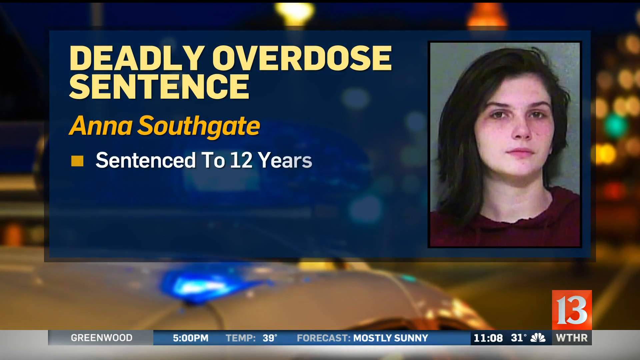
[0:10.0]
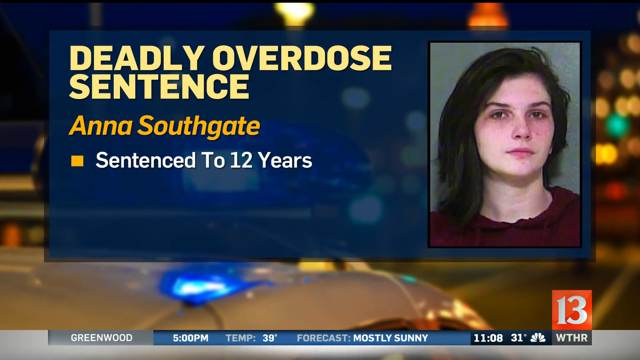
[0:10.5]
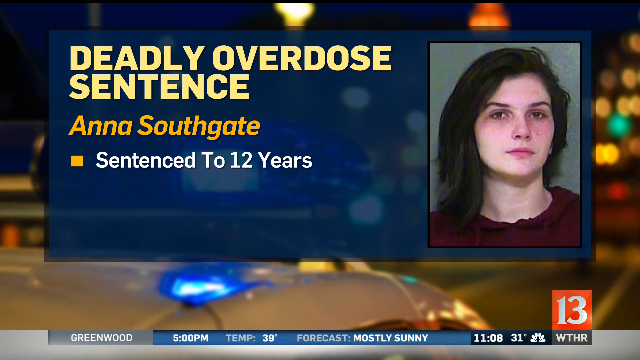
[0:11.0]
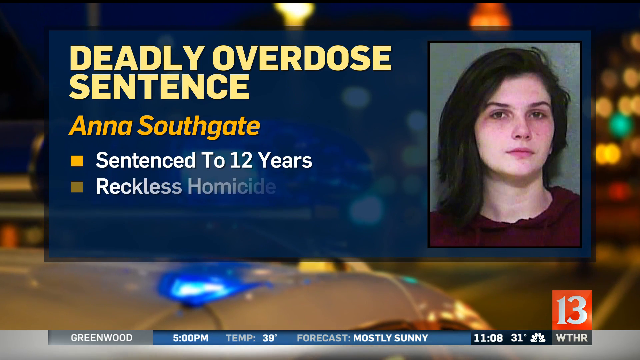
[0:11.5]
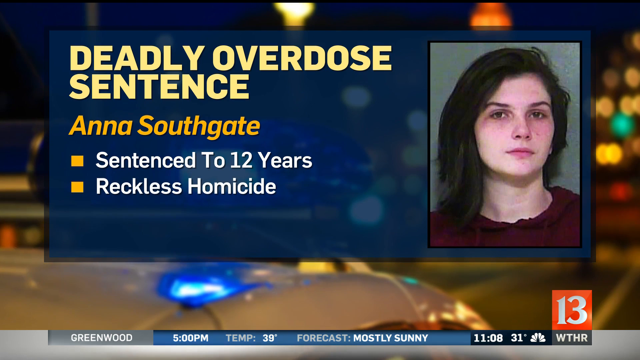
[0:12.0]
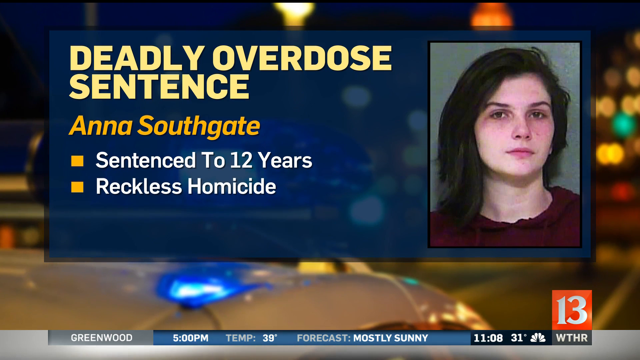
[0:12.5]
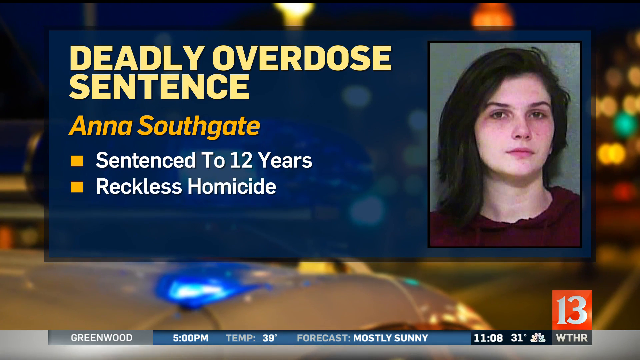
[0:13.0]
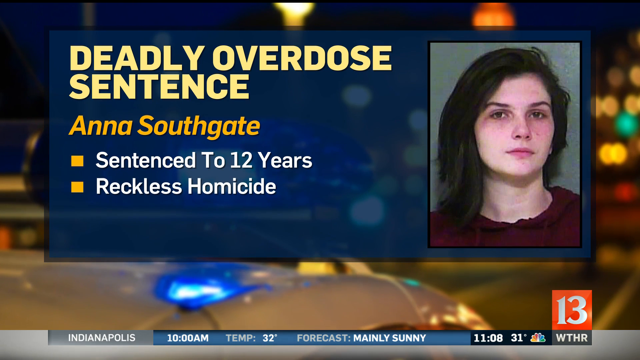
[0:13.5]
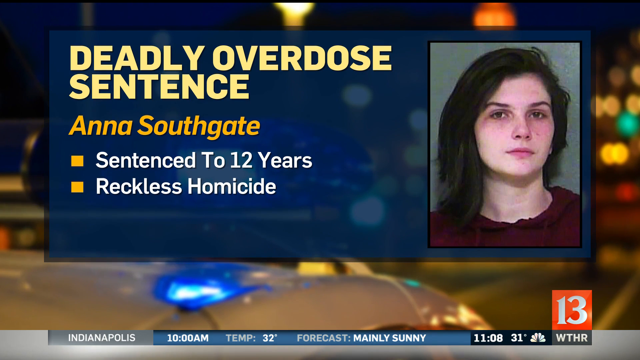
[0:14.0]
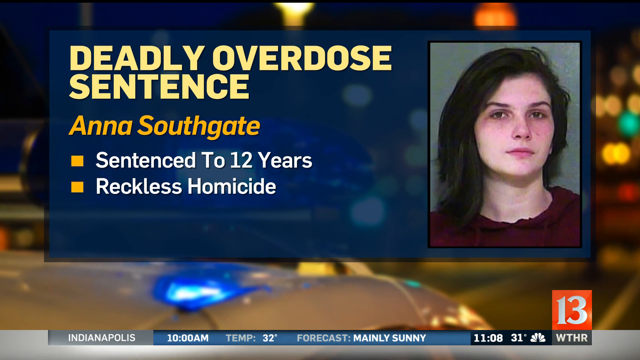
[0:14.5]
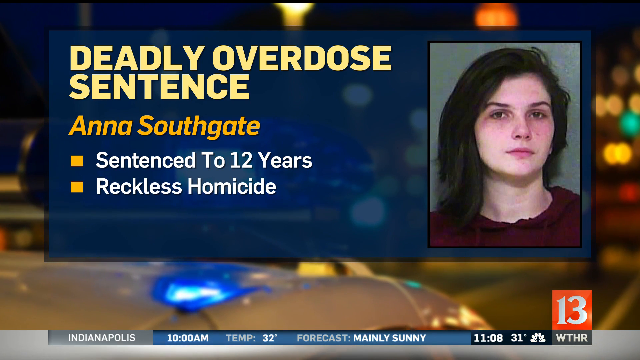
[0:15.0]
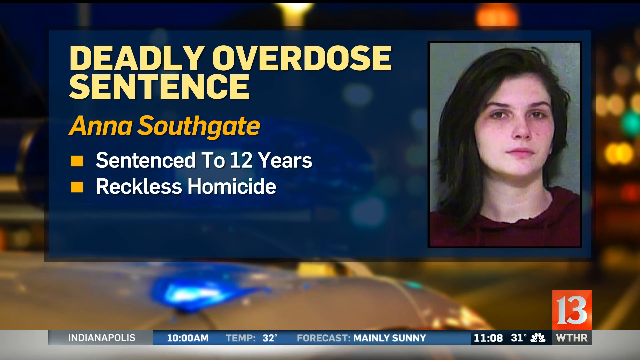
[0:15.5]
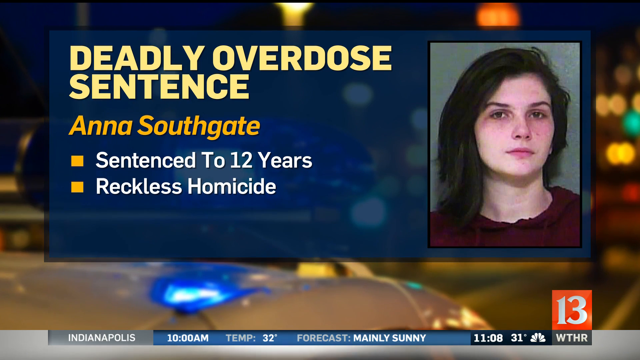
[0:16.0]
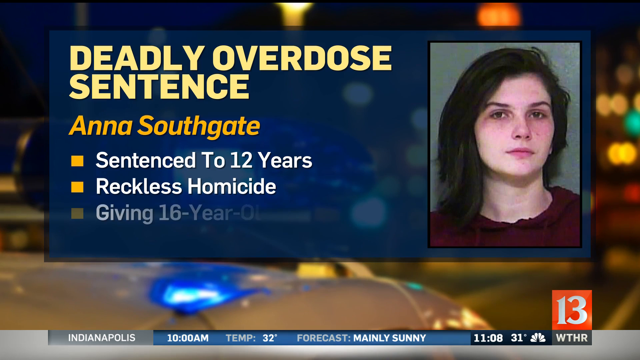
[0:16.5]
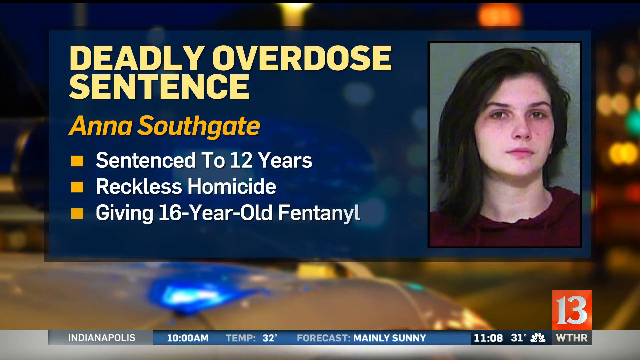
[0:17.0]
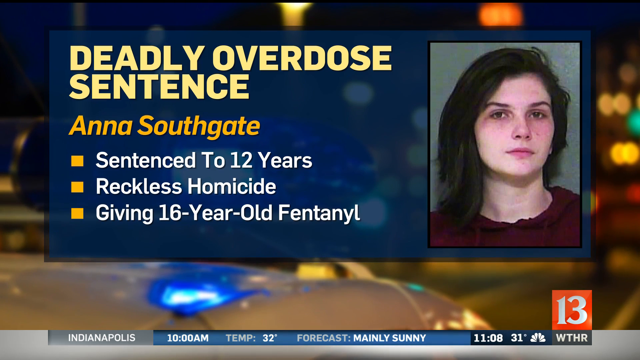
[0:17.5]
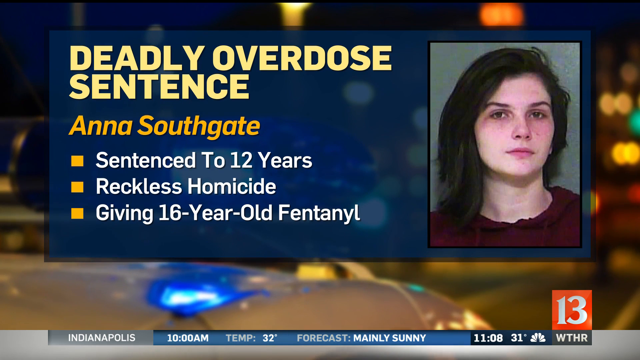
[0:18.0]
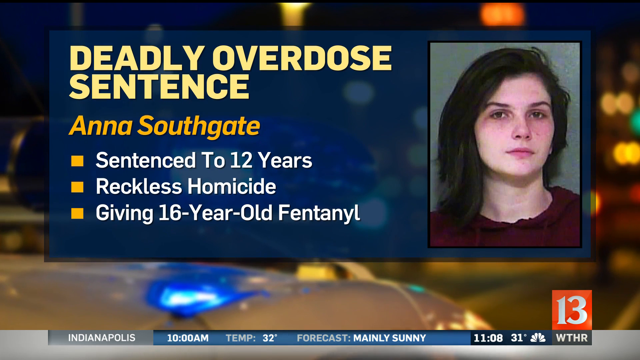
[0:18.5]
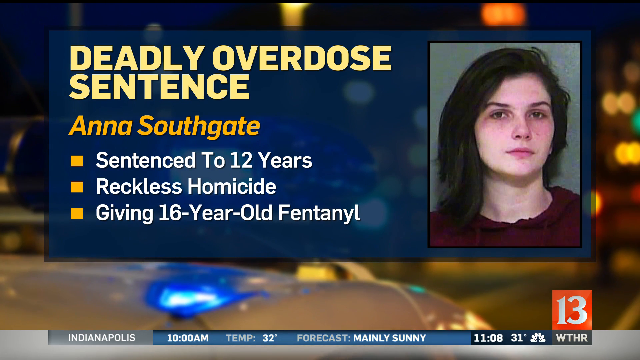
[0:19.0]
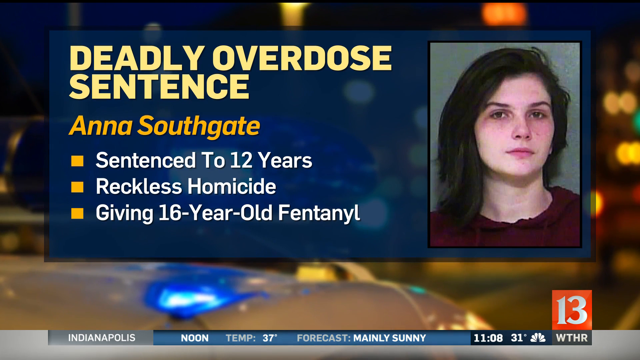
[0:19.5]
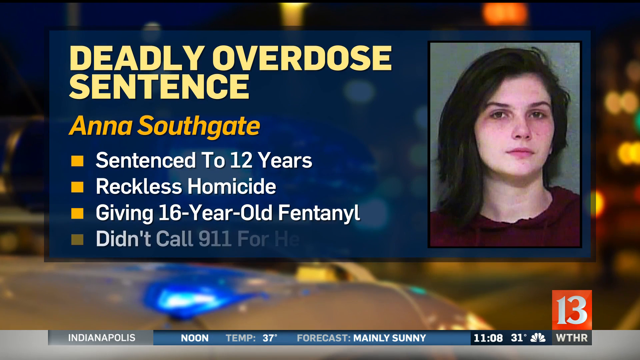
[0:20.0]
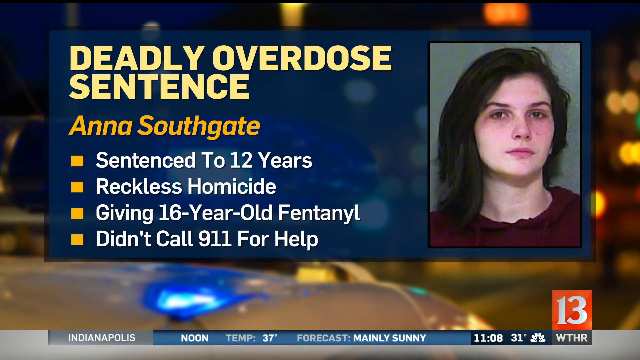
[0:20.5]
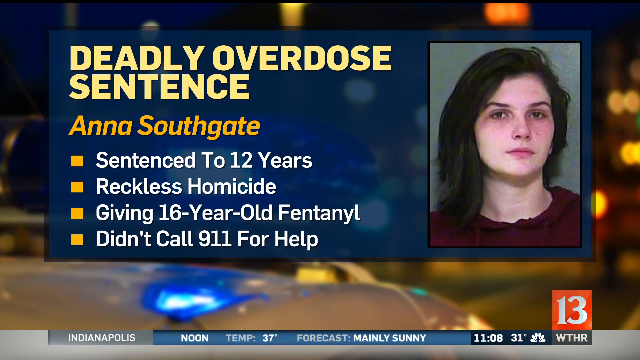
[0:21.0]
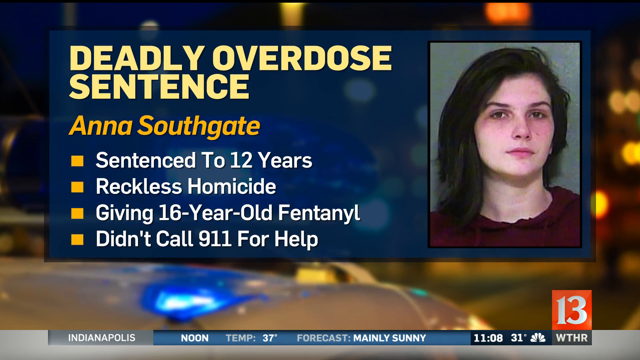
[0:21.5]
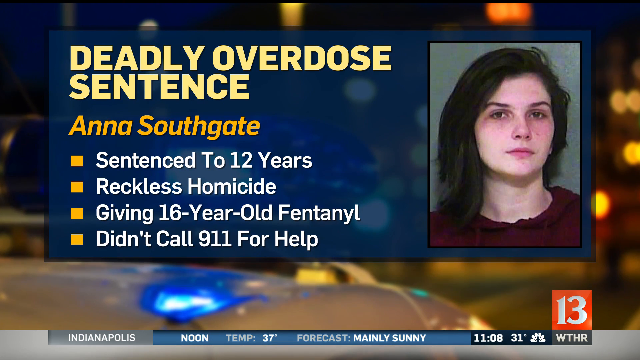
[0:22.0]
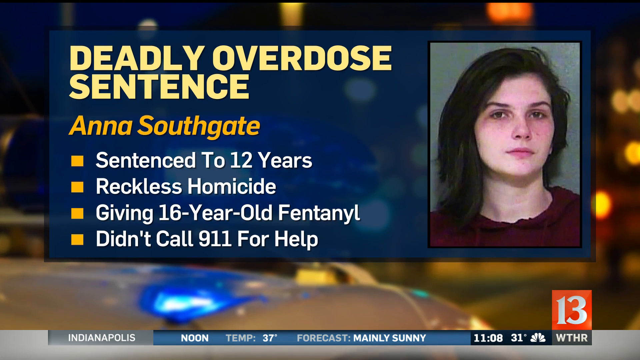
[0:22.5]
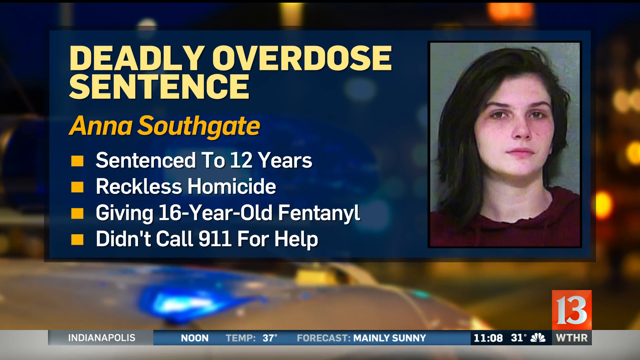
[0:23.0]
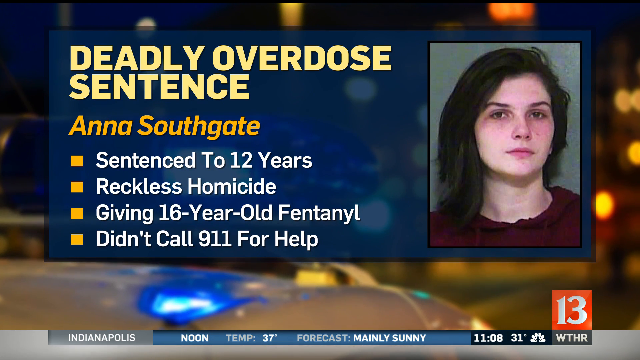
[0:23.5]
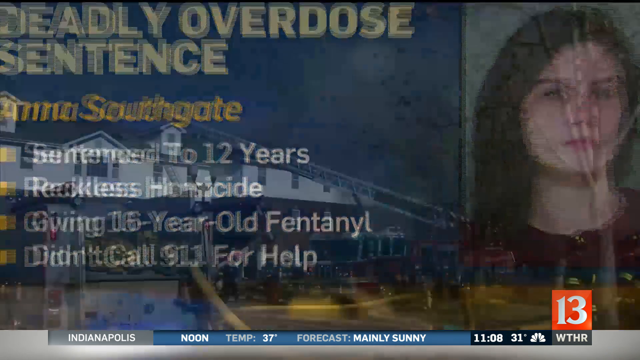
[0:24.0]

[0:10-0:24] A news report covers a deadly overdose sentence. The woman, Anna Southgate, was sentenced to 12 years for reckless homicide. A picture of her is shown that looks like a mug shot. She is accused of giving a 16-year-old fentanyl and not calling 911 for help. A fire in an apartment building is shown. The news reporter, a black woman with earrings, is indoors reporting on an overdose sentence, and she is seen speaking. Cocaine, a spoonful of cocaine and a syringe are shown. A little box on the reporter's right side shows it is out of Hancock County. Anna is highlighted and all the charges against her are displayed.